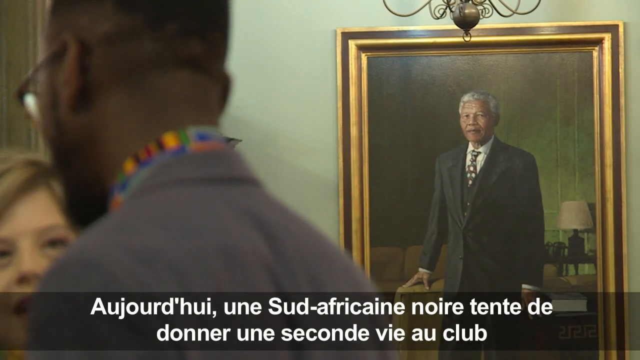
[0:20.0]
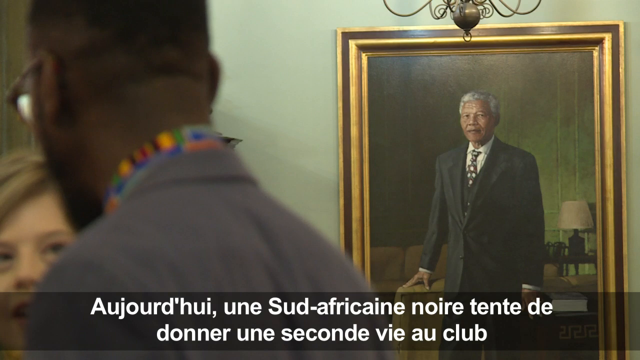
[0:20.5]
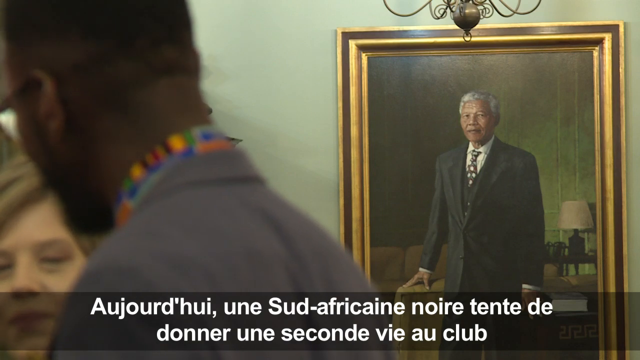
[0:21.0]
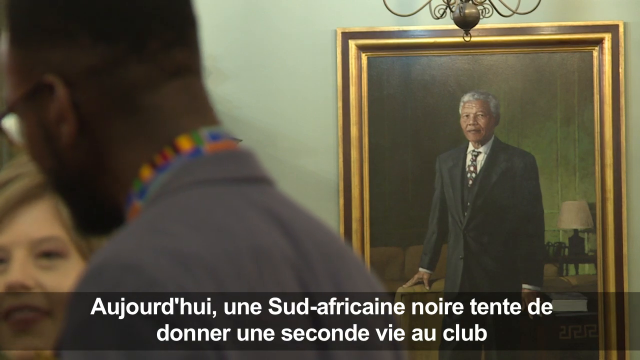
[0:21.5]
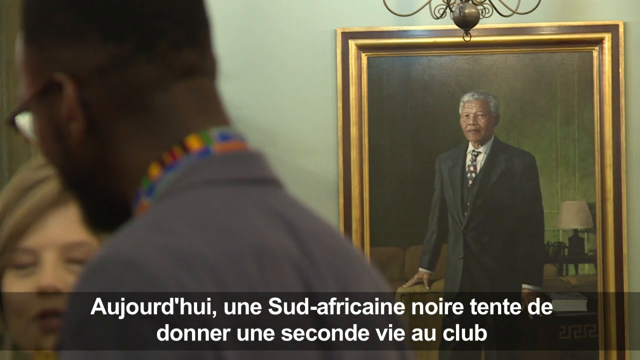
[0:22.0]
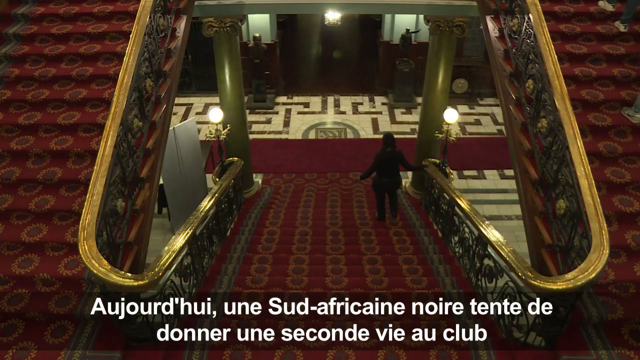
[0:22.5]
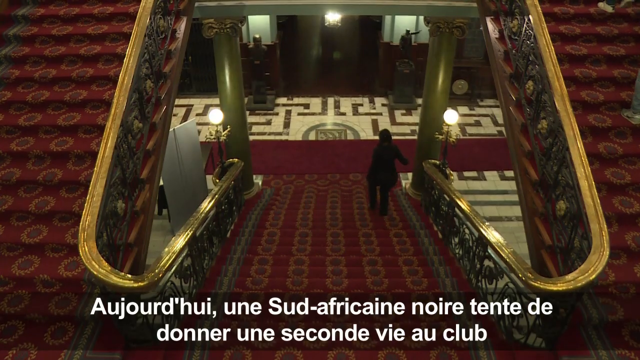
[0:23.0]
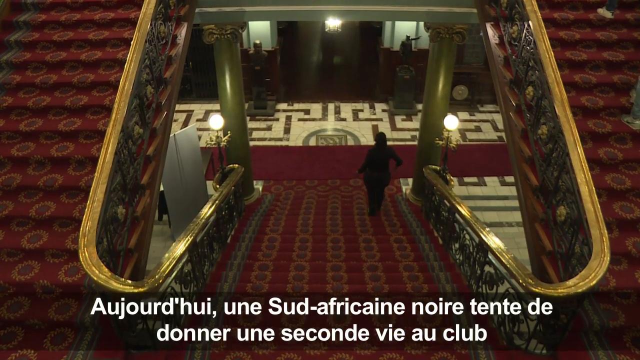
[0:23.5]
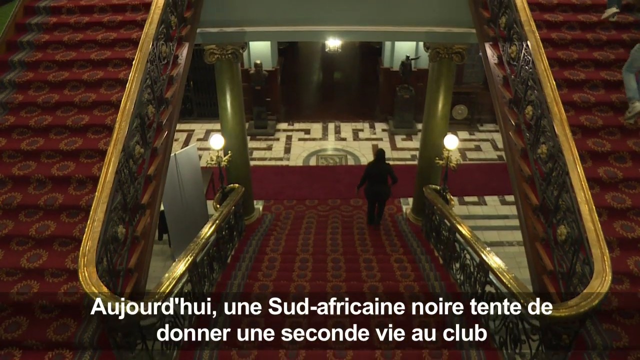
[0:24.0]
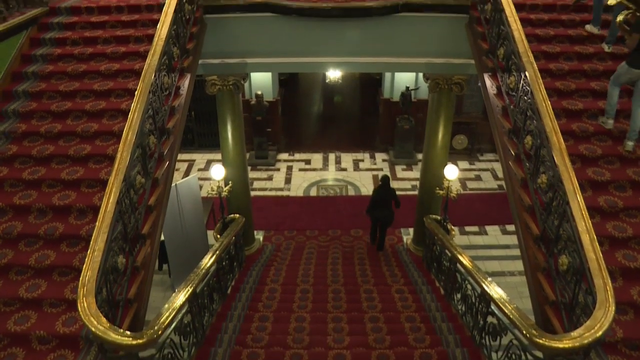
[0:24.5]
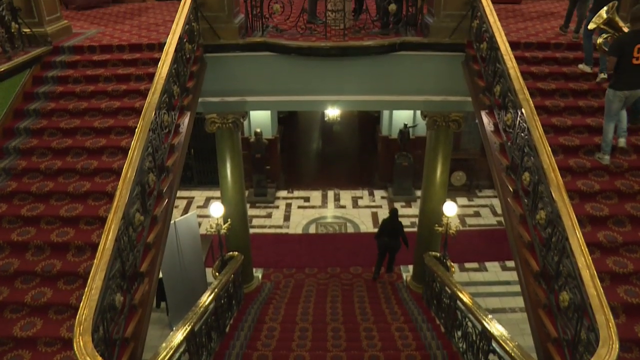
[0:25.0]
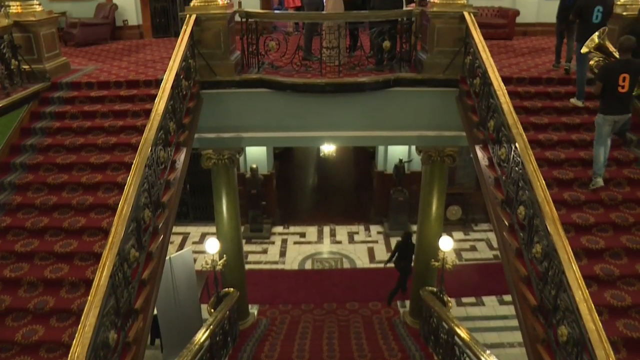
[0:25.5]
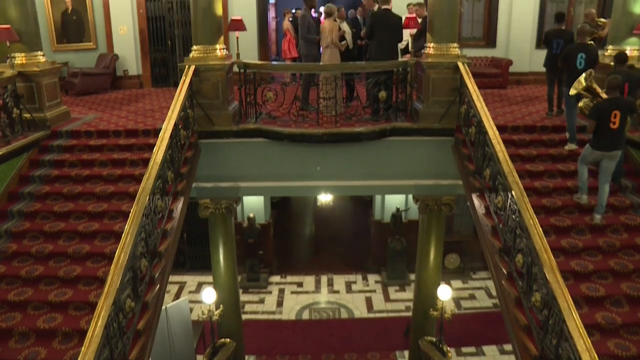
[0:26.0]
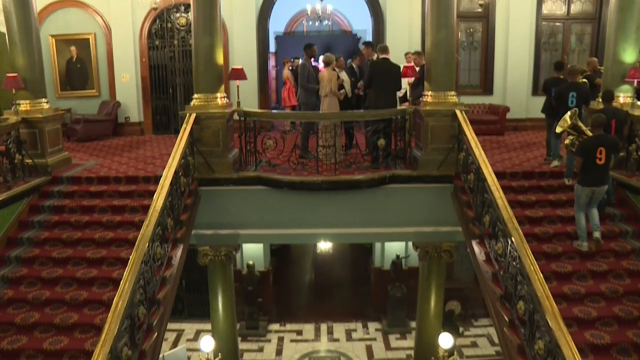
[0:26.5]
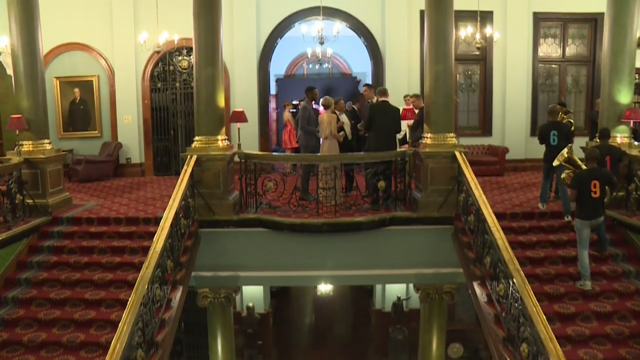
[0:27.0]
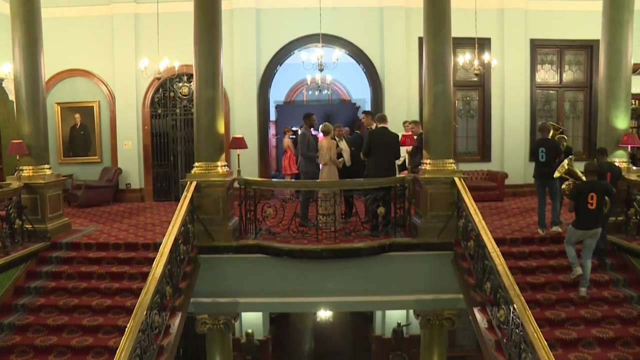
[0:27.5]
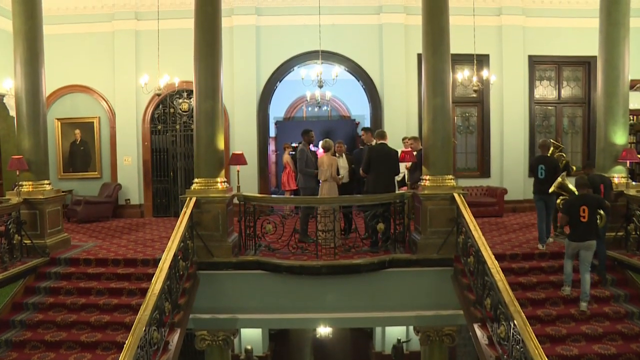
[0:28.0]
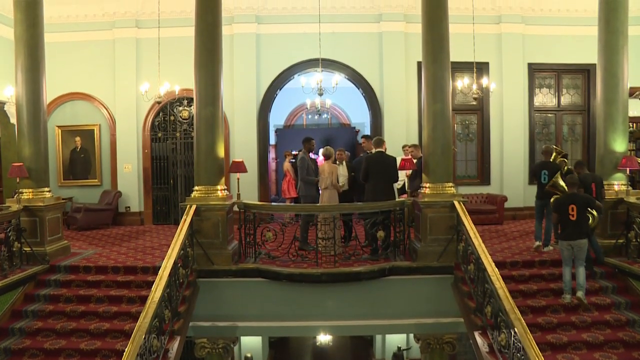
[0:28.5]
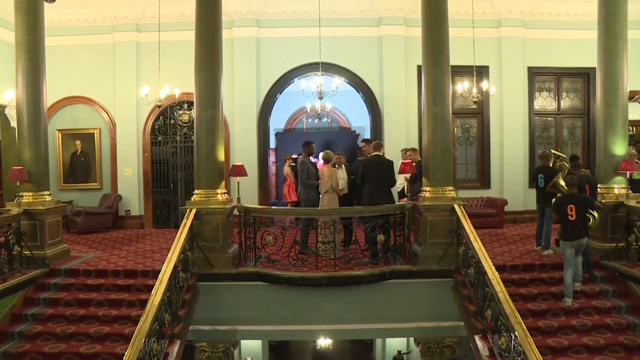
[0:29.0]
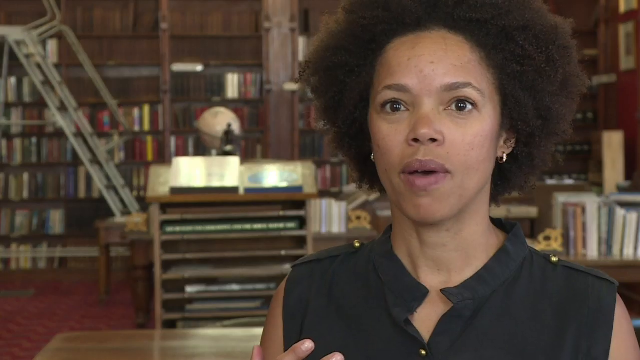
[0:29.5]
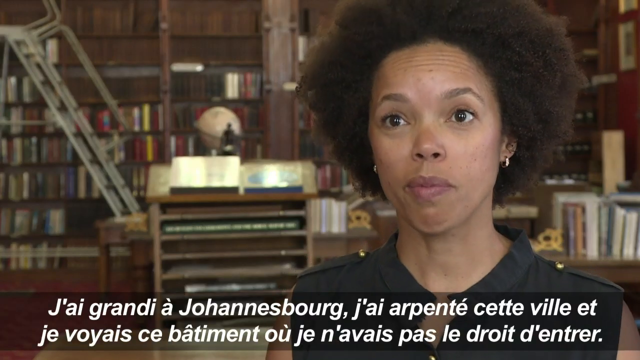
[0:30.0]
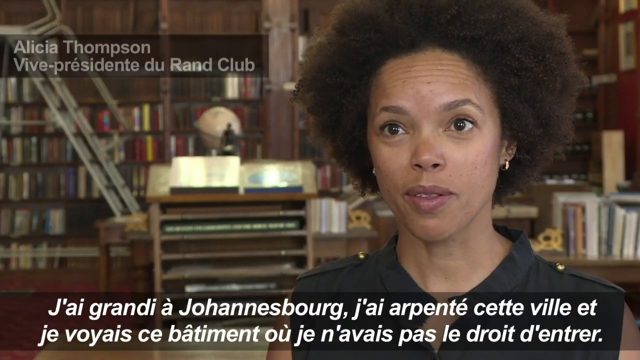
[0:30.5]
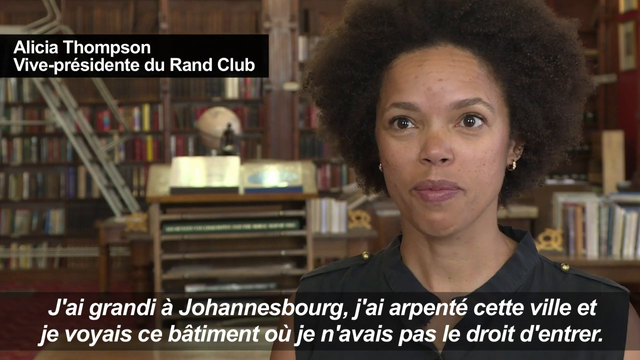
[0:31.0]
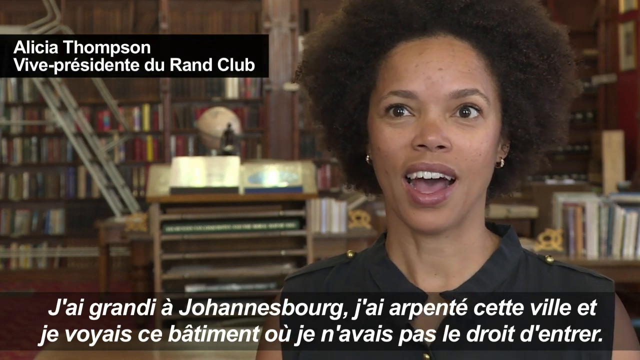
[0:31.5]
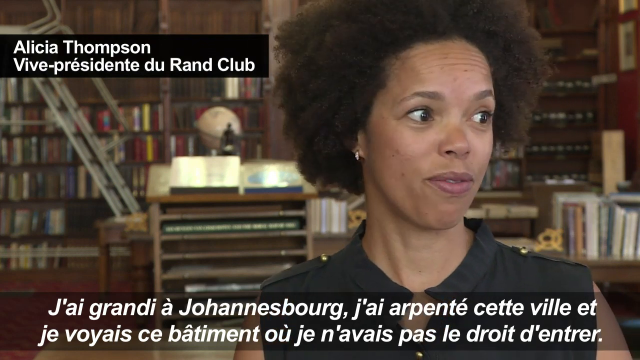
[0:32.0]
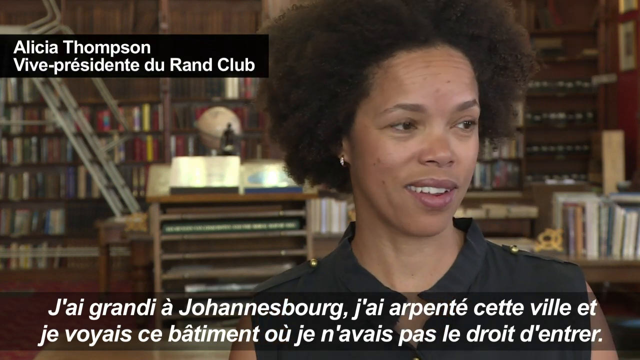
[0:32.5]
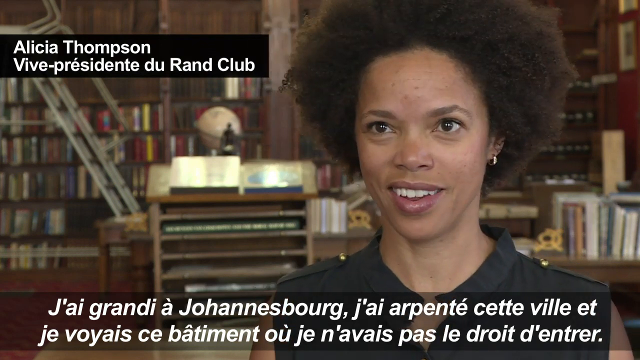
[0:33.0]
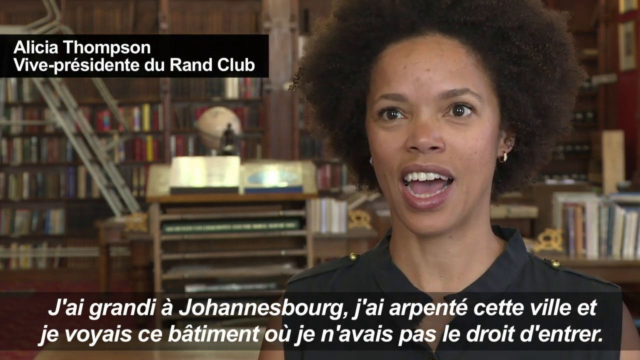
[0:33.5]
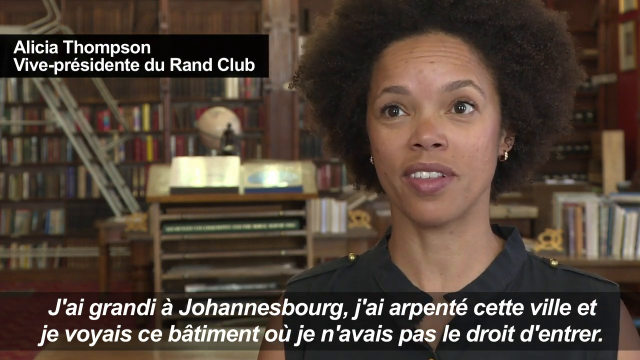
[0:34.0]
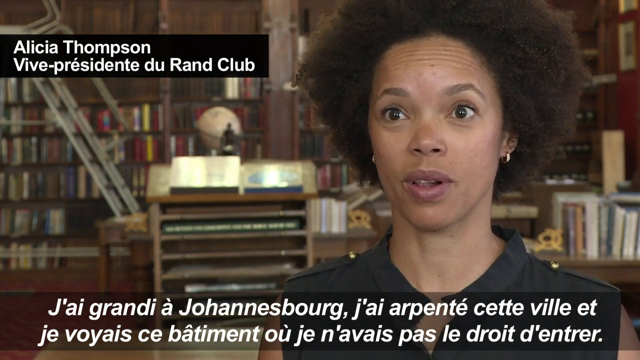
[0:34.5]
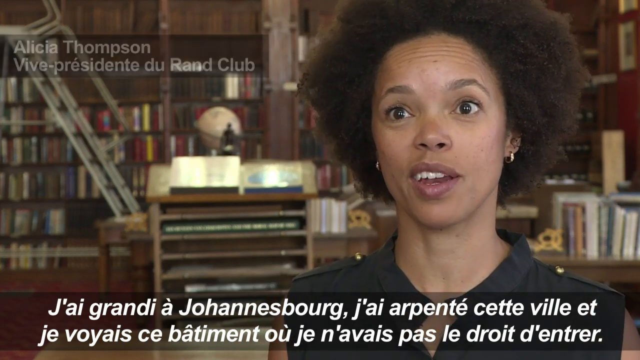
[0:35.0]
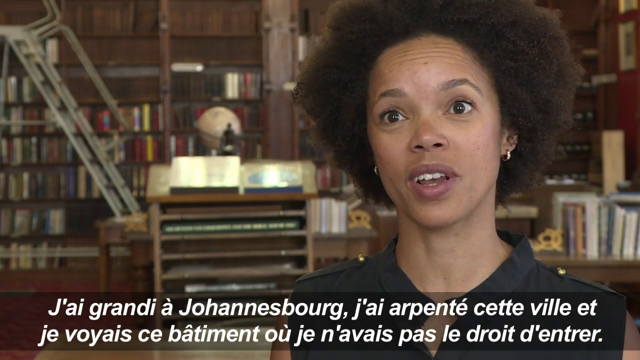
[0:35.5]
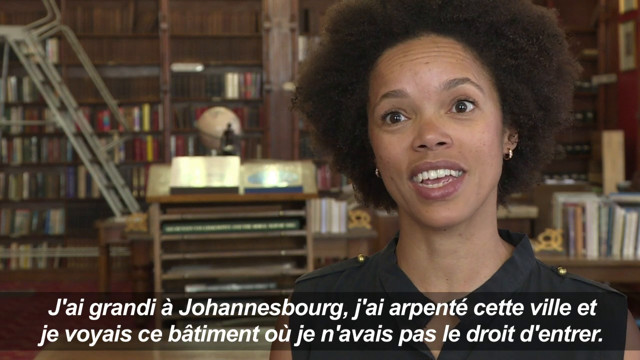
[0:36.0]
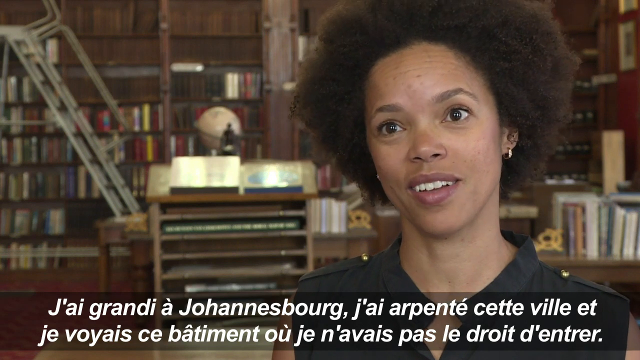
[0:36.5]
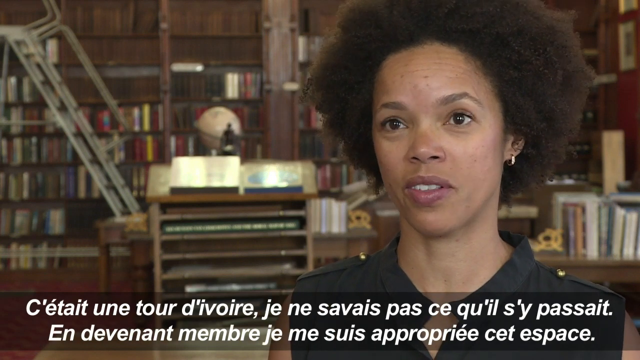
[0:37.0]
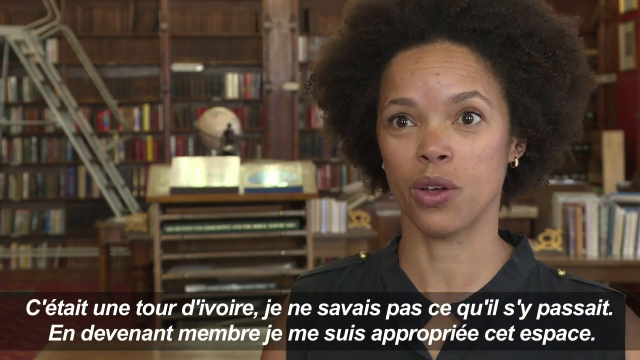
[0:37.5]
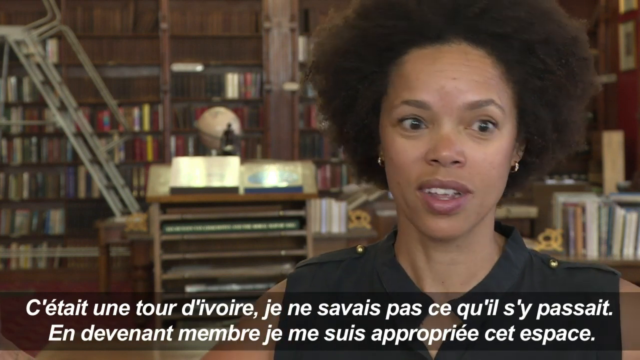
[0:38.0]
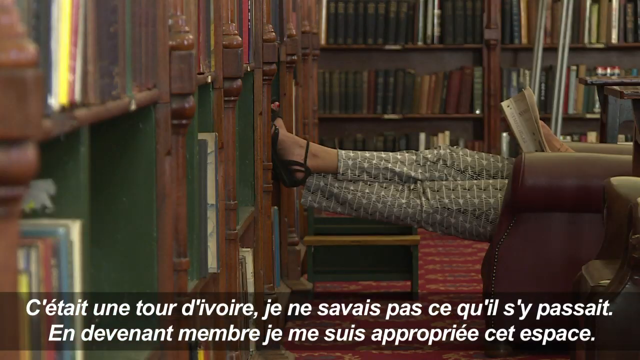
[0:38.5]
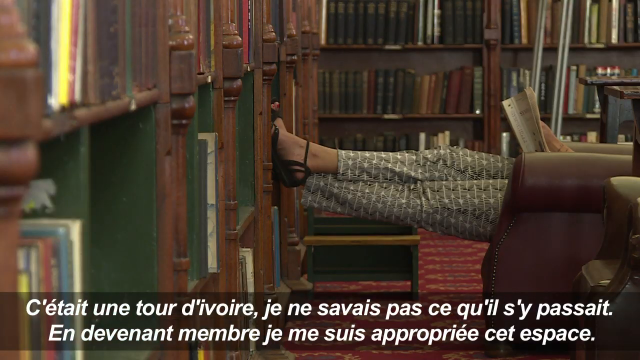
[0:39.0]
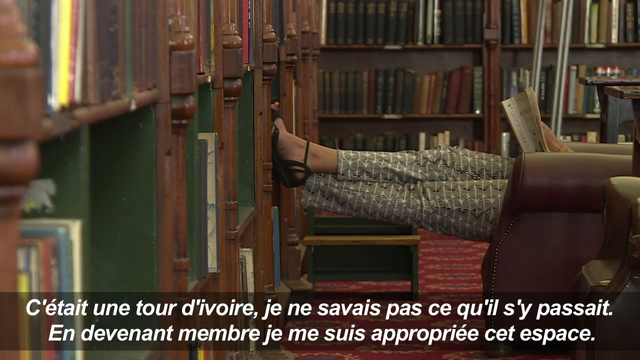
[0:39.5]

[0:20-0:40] The man in the foreground of the room with the Nelson Mandela painting speaks to a woman who is barely in the picture; only her two eyes, her nose and a bit of her hair are visible. The wall next to the painting is a light green color. There are some subtitles in a foreign language. The scene then moves to what looks like a foyer of the hotel, with two grand staircases, one on the right and one on the left, covered in red carpet with gold accents. The staircase railings are encased in a gold color, and the balconies are gold-colored too. There are four large pillars, gold from top to bottom. There is an archway that is a door, and in front of it about six or seven people are standing about. To the left there is another archway door and a painting of an archway on the wall. On the right-hand side of the big archway there are two glass windows. Three chandeliers, not grand ones, hang down, each with four lights. On the right-hand staircase are what look like band members: one has a tuba and the other has another sort of horn. They wear gray pants; the one with the tuba has a black shirt with the number nine, and the one in front of that person, holding the other horn, has the number six on a black shirt. They move up the stairs playing their instruments. Next is a woman with the caption "Alicia Thompson Viva Presidenta Durand Club", with some wording in a foreign language beneath her. She has a little afro and smiles and talks to the camera, raising her eyebrows and opening her eyes wide as she speaks. She is standing in what looks like a library with many books and a globe in the background. Then the shot goes to an odd angle where she looks like she is standing sideways on the camera.